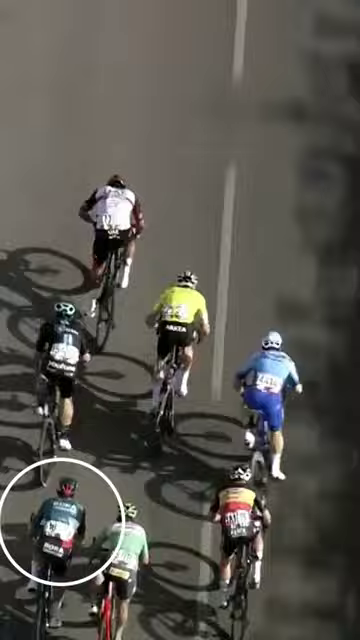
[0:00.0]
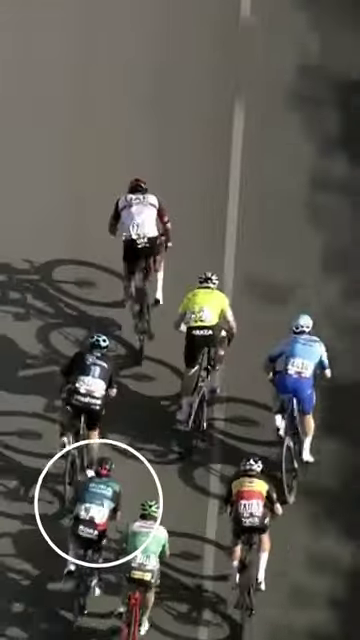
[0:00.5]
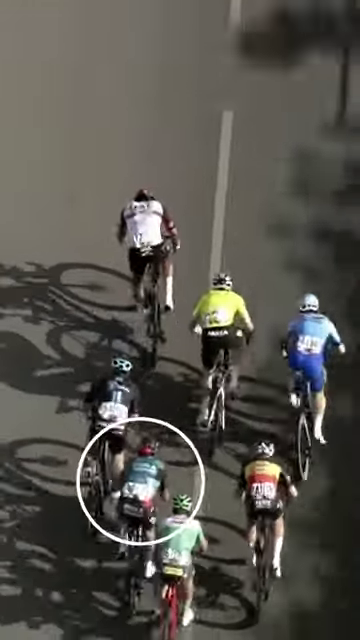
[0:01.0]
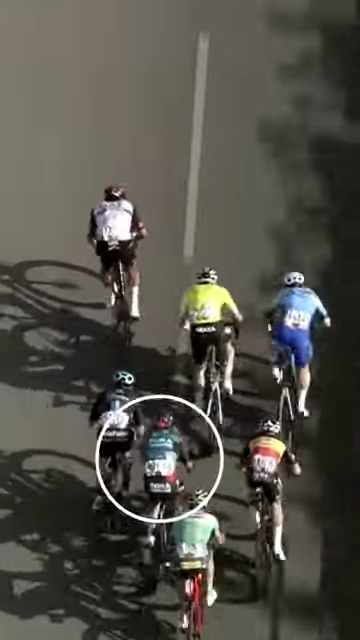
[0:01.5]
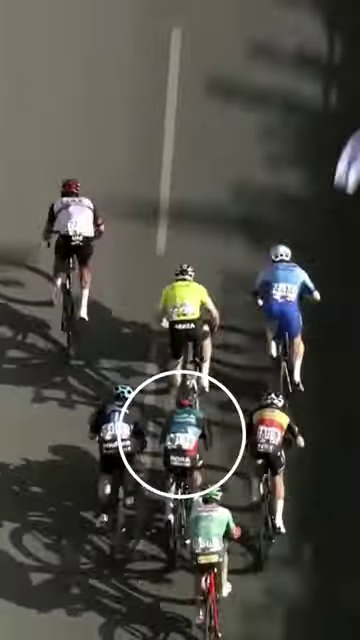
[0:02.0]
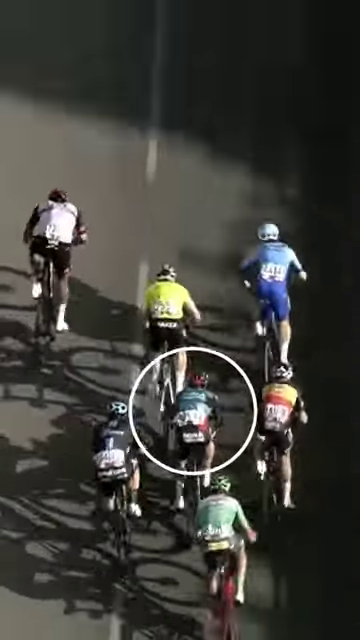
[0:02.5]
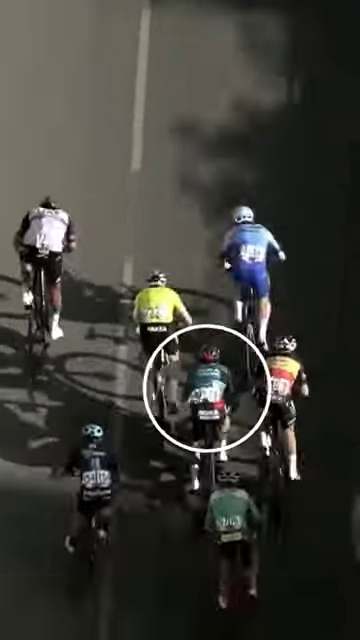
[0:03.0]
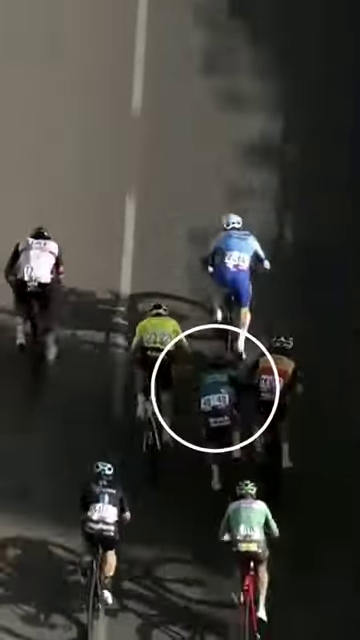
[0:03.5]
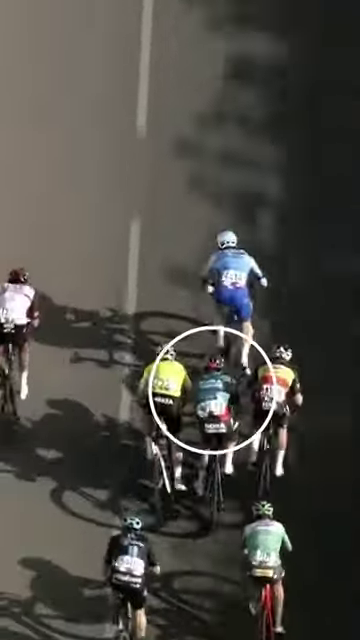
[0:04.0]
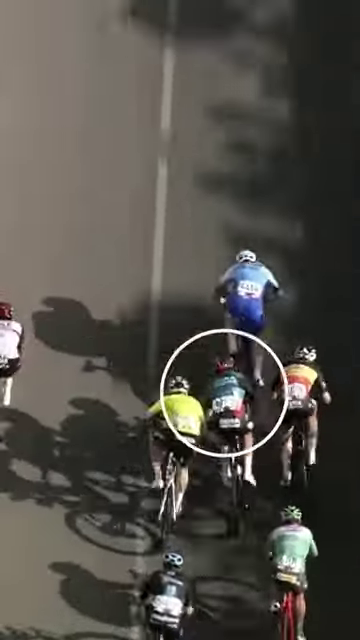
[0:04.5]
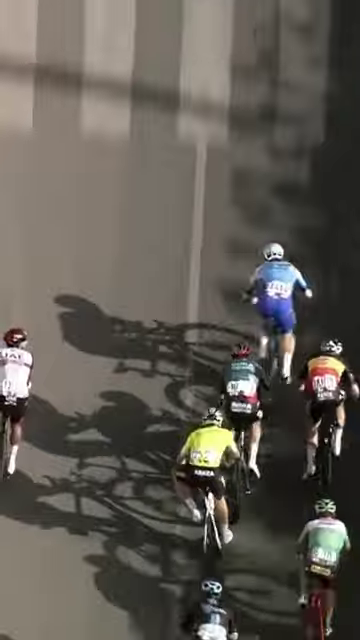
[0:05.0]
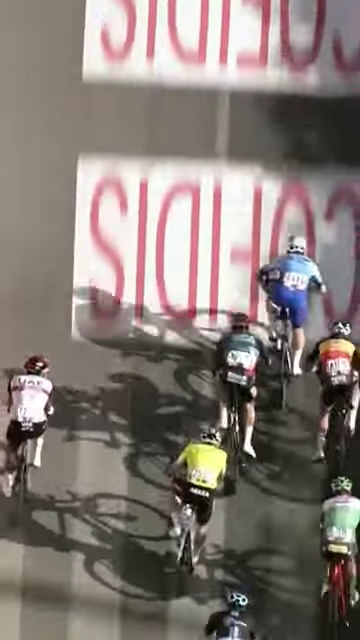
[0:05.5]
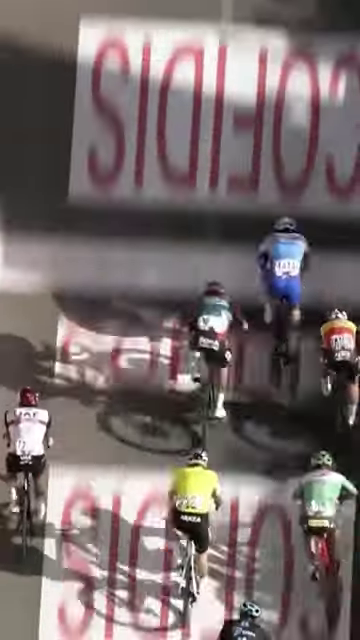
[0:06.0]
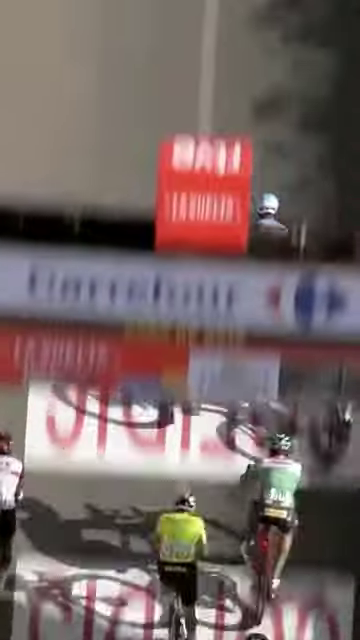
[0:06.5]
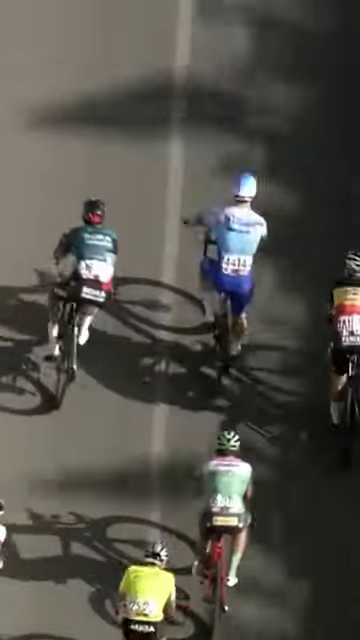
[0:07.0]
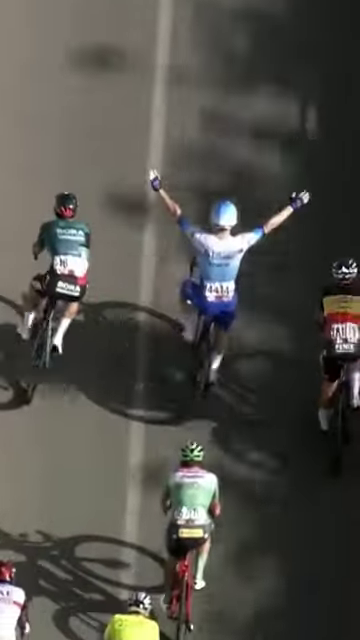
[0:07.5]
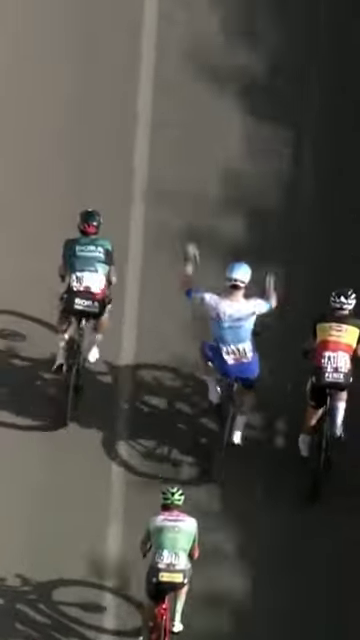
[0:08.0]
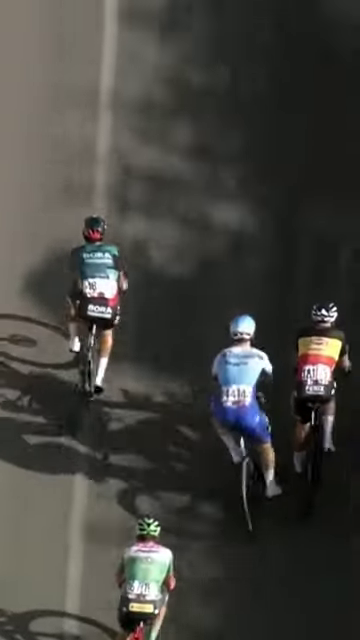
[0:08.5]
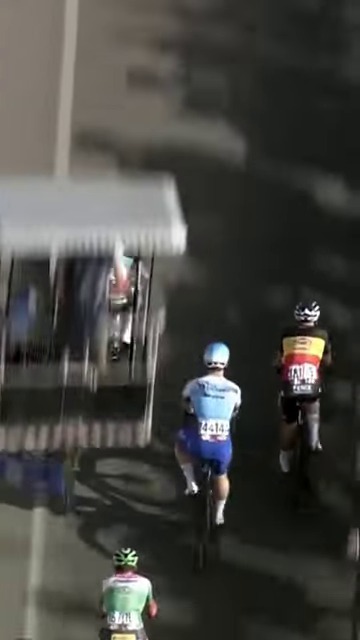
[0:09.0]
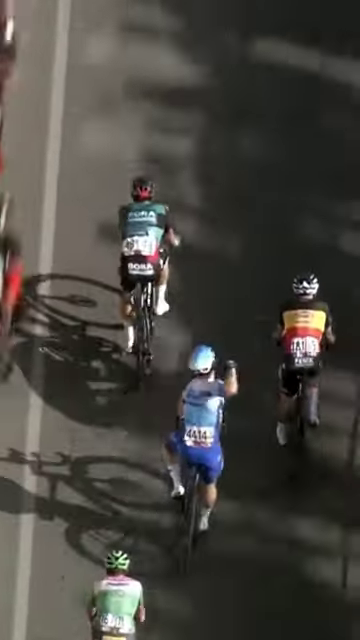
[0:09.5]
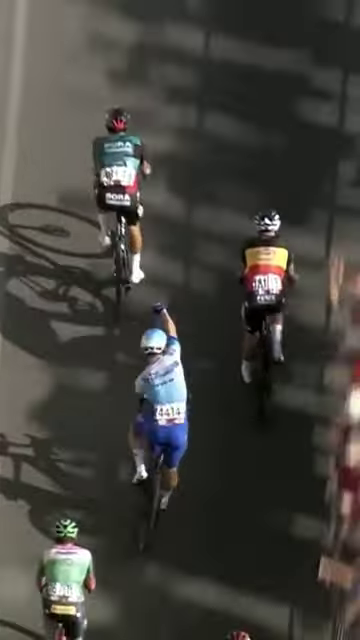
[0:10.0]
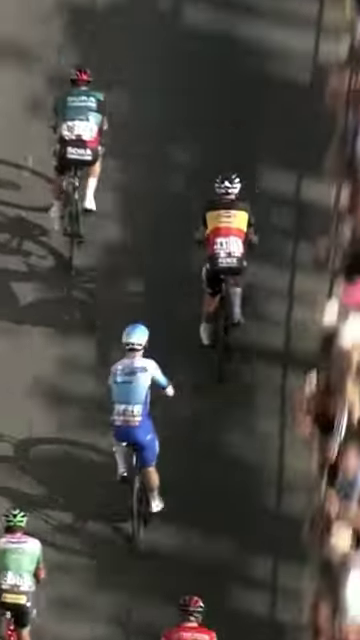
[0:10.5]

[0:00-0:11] A road bicycle race shows seven main cyclists. One has a circle drawn around him, showing how he comes up from behind, passing the other five cyclists and catching up to almost win the race. A man in a light blue top with darker blue bicycle shorts wins the race, and when he does he puts his arms up into the air and kind of punches the air in victory. The rider on the top left wears a white shirt and black shorts. Another rider on the top left, progressing ahead of everybody, wears a green shirt and black shorts. The rider on the far right wears a black, light orange, and dark orange striped shirt with black shorts. A rider in yellow with black shorts is behind everybody. At the very back is a rider in a green shirt with what looks like white color blocking across the shoulders, and black shorts. On the side, the shadow of the crowd and of different structures they pass is cast onto the pavement.